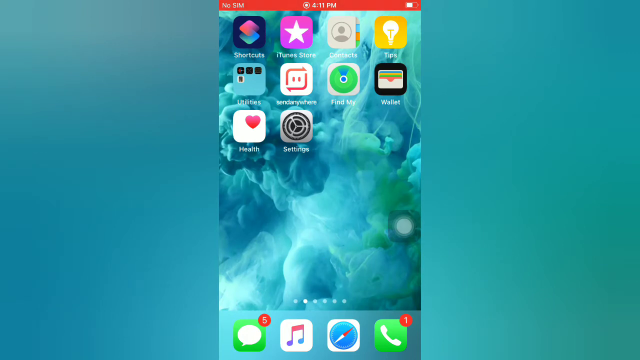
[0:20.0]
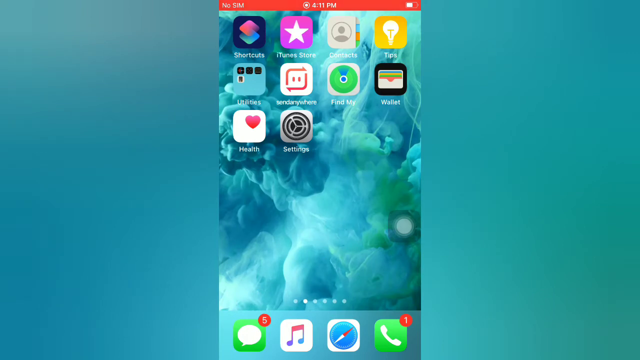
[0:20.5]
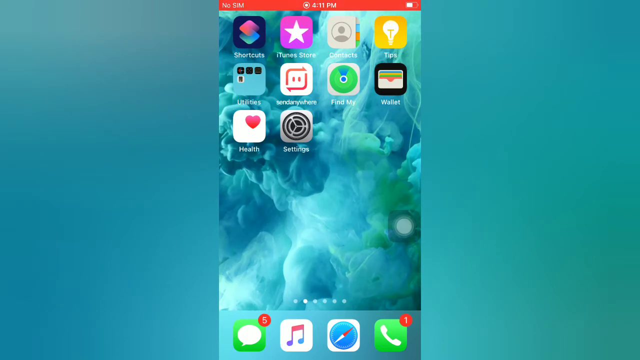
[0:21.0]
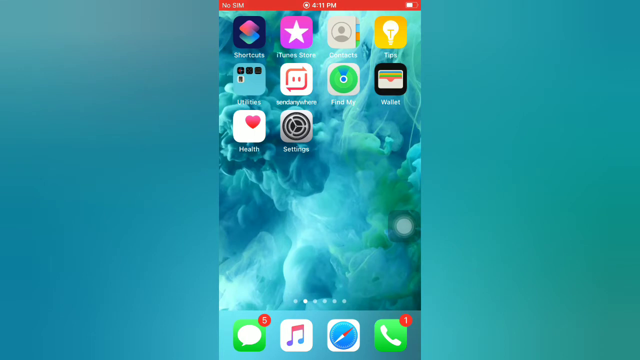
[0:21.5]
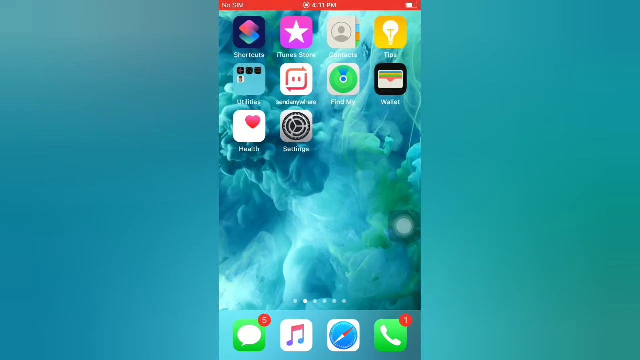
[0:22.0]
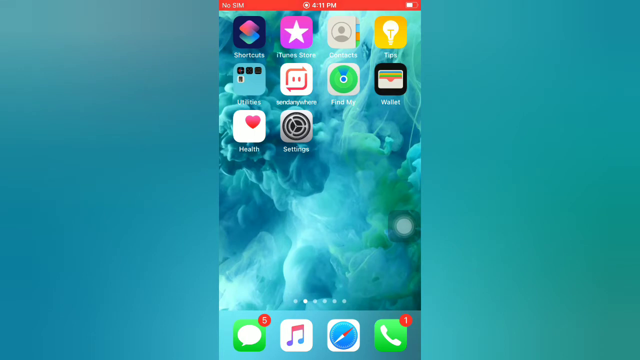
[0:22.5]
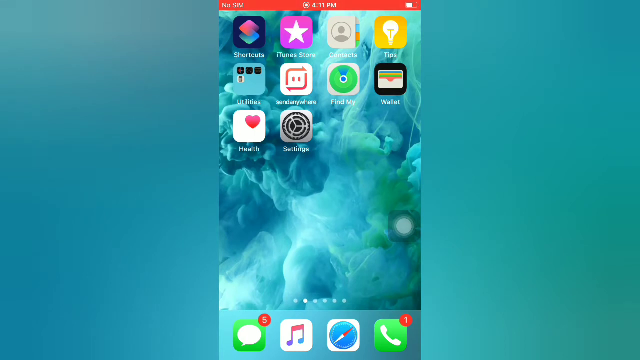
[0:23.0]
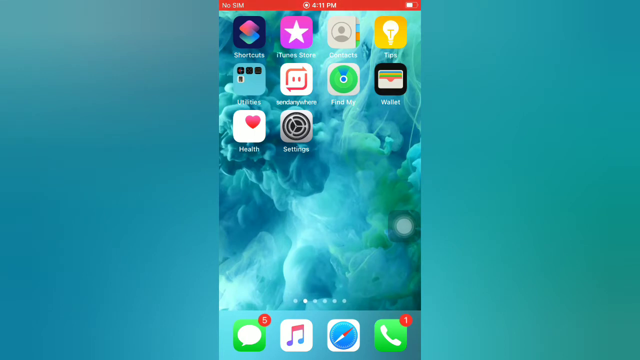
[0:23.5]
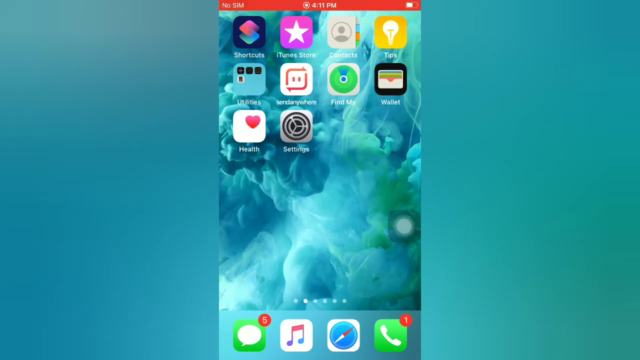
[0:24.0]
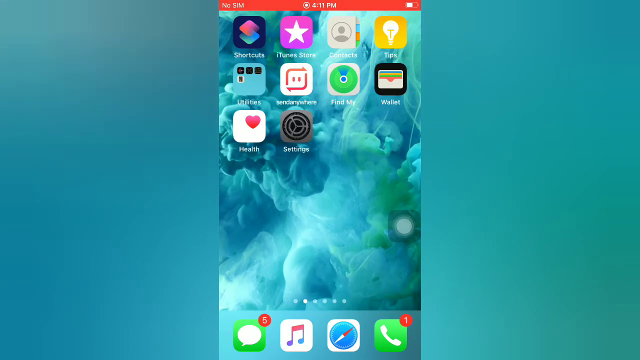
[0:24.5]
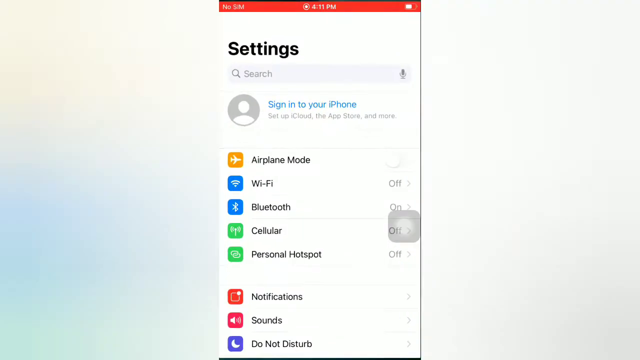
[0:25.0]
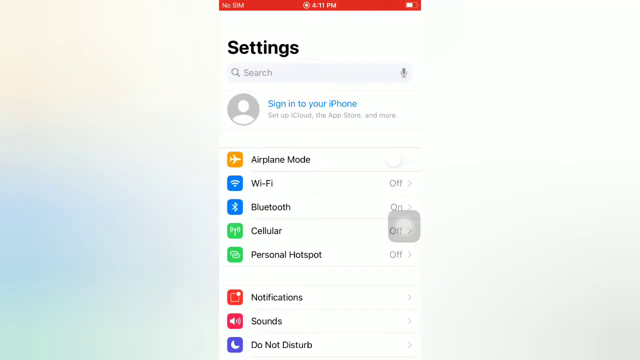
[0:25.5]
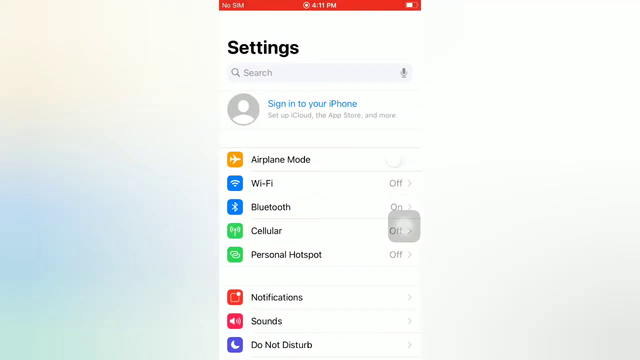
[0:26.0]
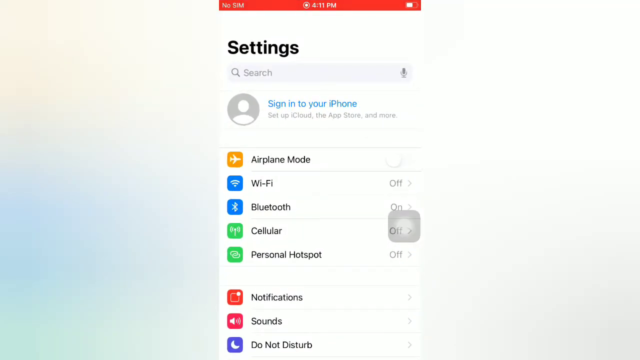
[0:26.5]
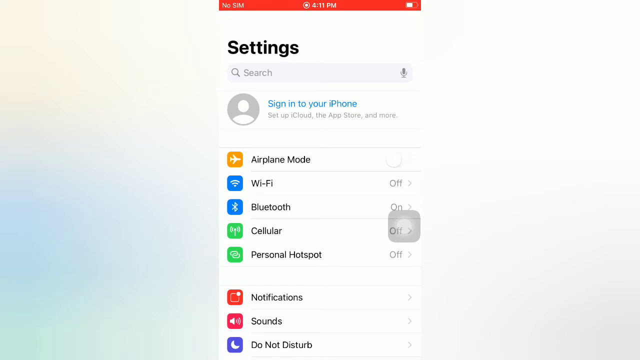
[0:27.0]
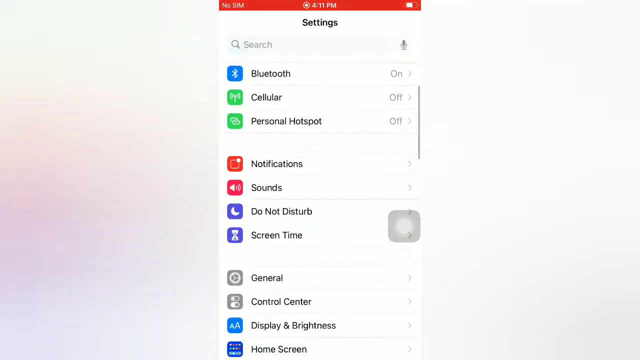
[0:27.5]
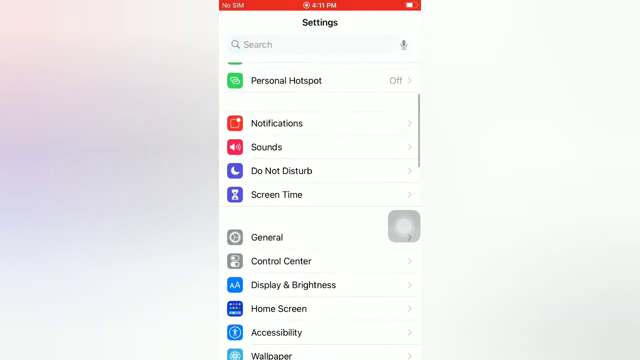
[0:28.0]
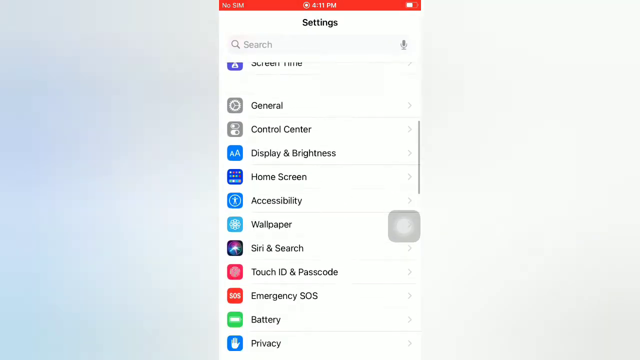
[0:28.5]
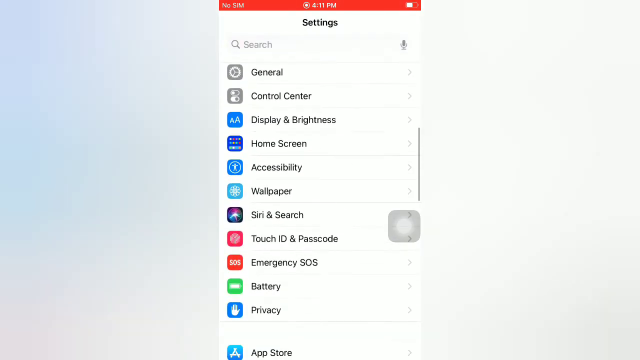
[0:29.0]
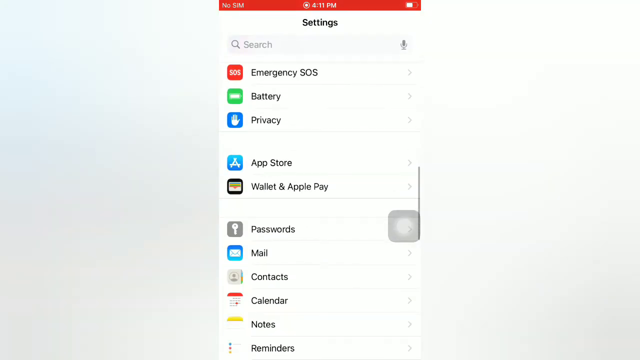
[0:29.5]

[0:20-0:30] An iPhone screen with various apps is displayed, with over 10 apps on the main screen arranged in three columns. A white dot at the bottom indicates this is the second of six screens, and below it are four icons: Messages, Music, Browser and Phone. Messages has 5 notifications and Phone has 1 notification, indicated in red at the top right of each icon. The settings app, a black icon in the 3rd row, 2nd column, is opened, and the settings screen is scrolled down towards the end. The background of the screen is cloudy, with thick smoke smudged in dark and light blue mixed with white and light green.